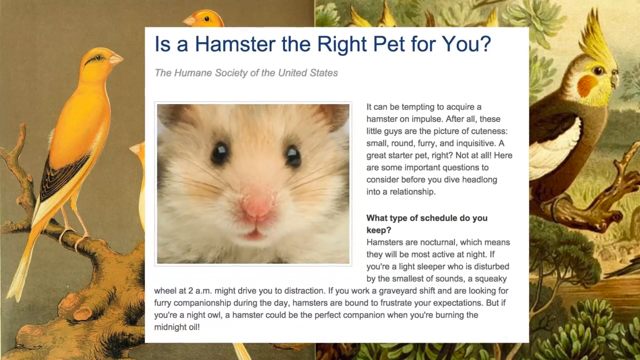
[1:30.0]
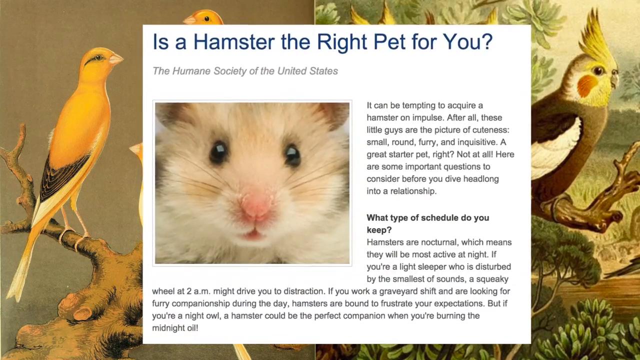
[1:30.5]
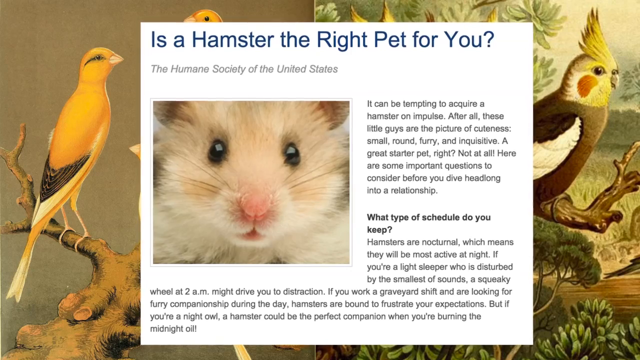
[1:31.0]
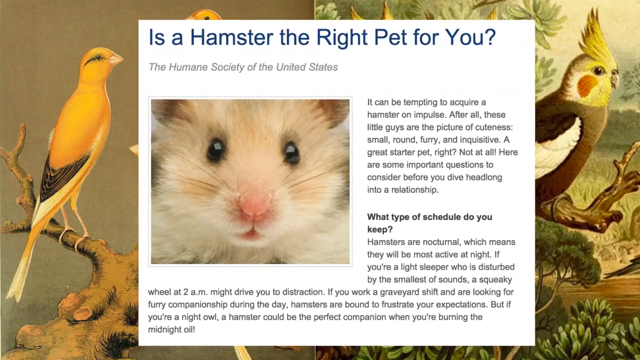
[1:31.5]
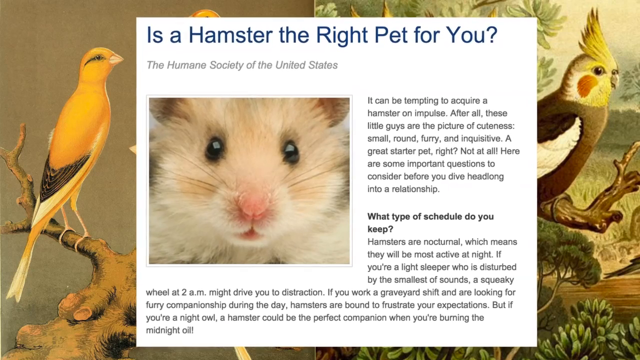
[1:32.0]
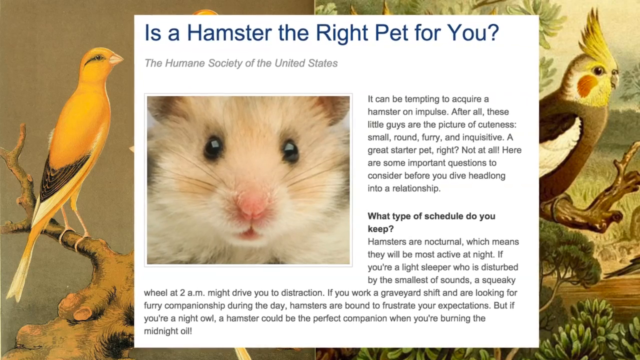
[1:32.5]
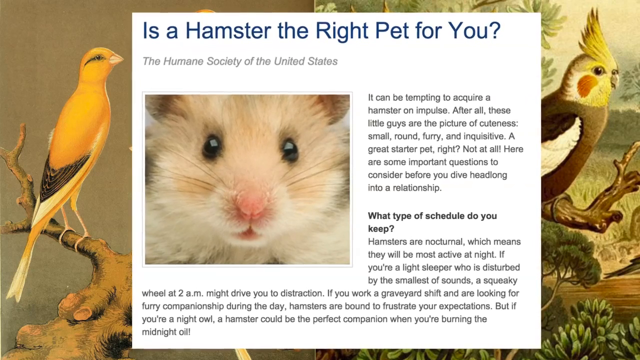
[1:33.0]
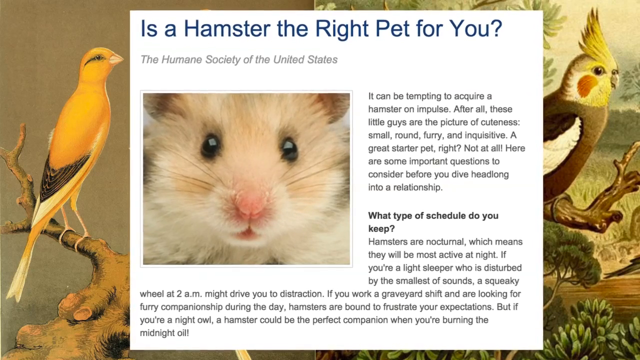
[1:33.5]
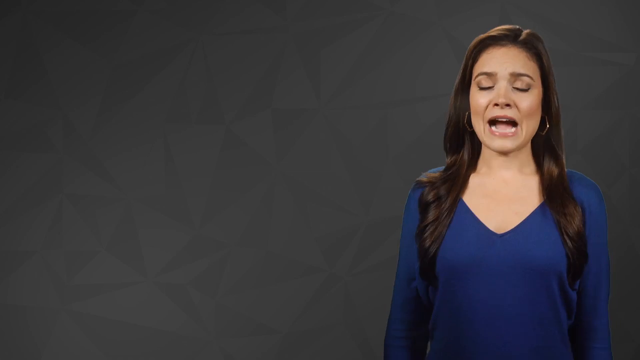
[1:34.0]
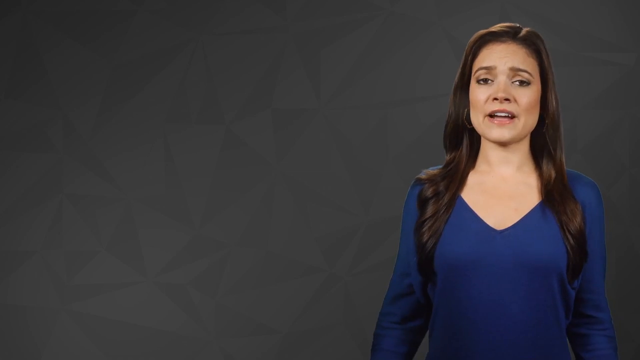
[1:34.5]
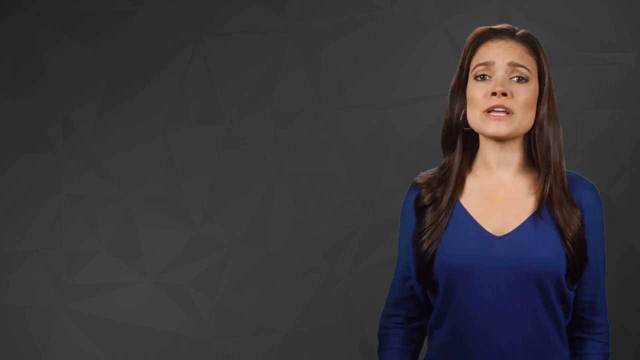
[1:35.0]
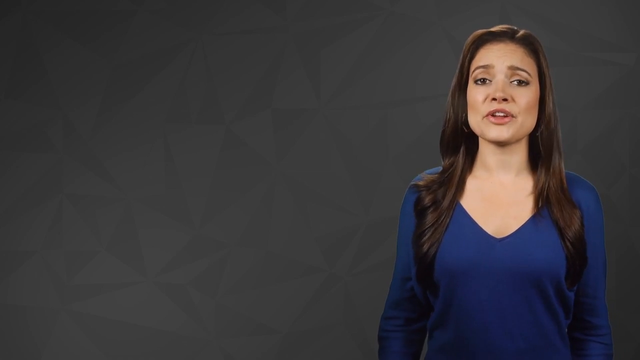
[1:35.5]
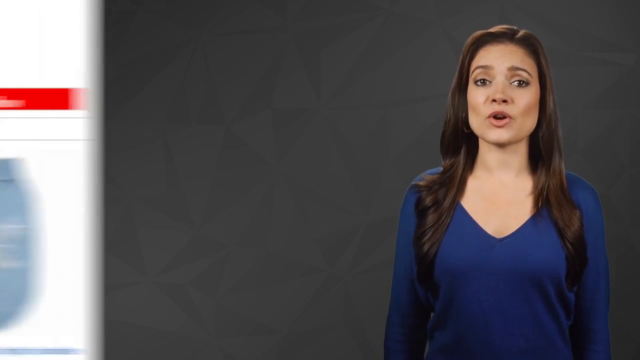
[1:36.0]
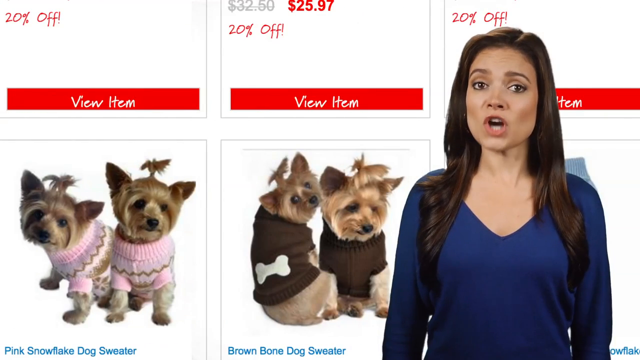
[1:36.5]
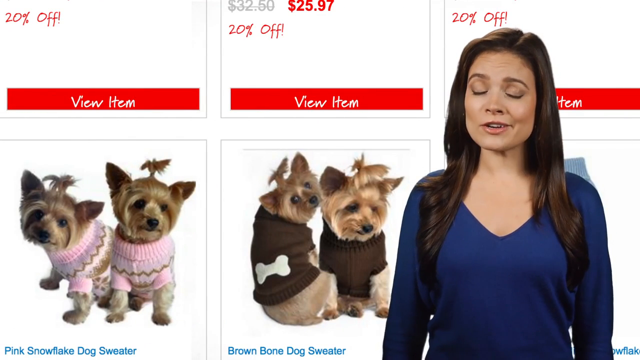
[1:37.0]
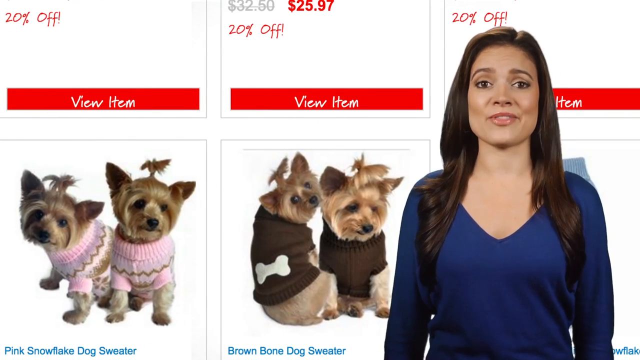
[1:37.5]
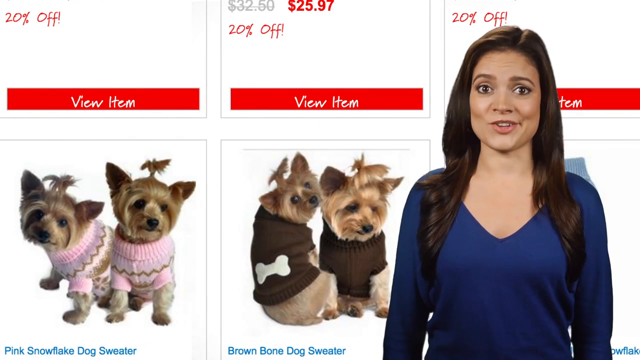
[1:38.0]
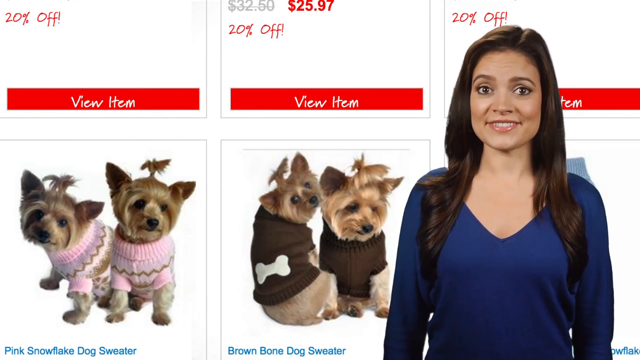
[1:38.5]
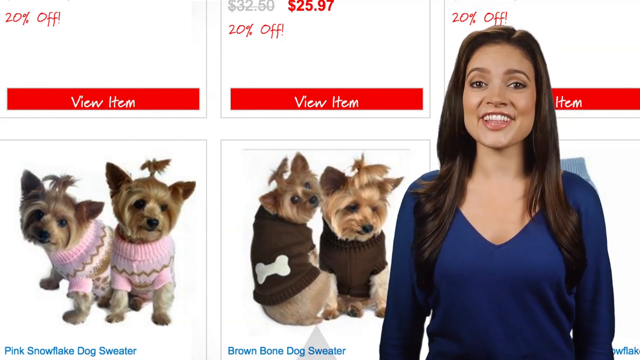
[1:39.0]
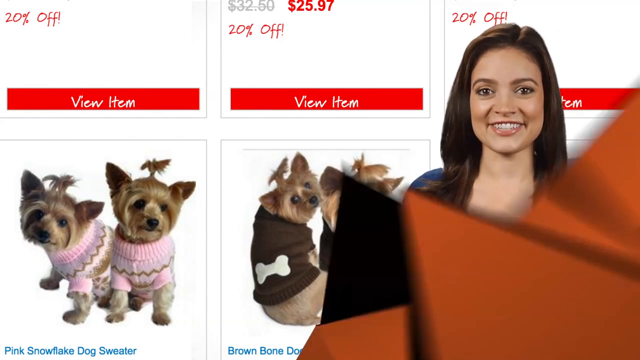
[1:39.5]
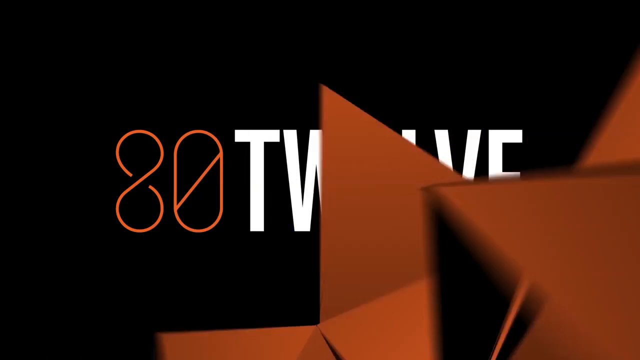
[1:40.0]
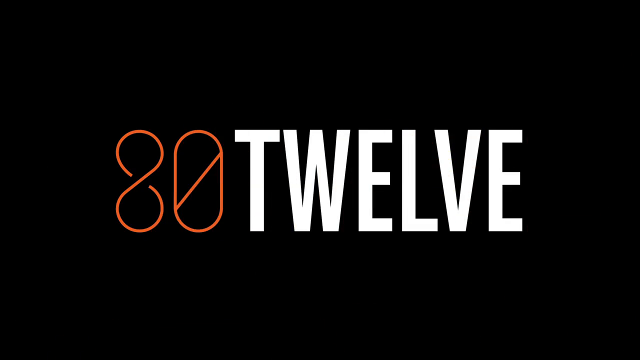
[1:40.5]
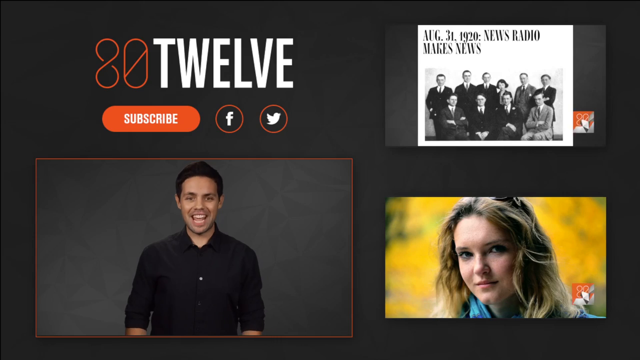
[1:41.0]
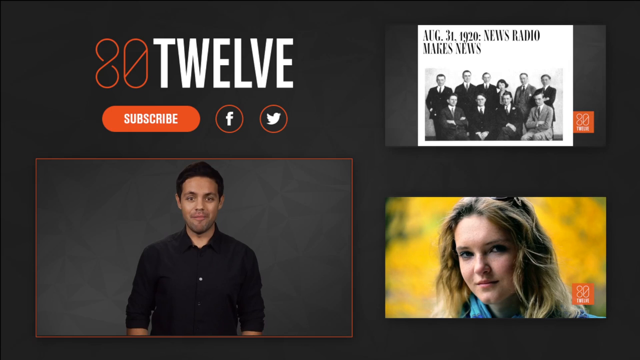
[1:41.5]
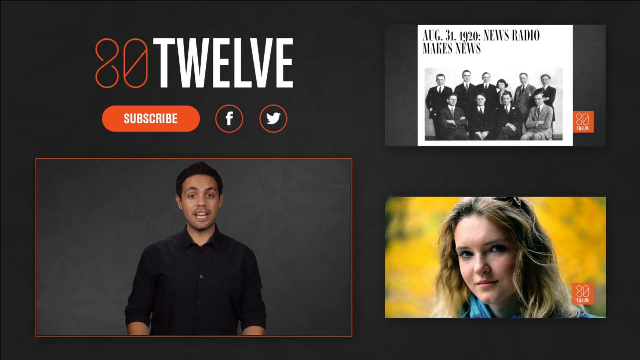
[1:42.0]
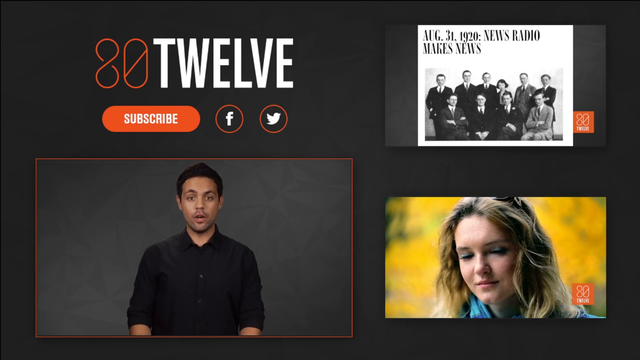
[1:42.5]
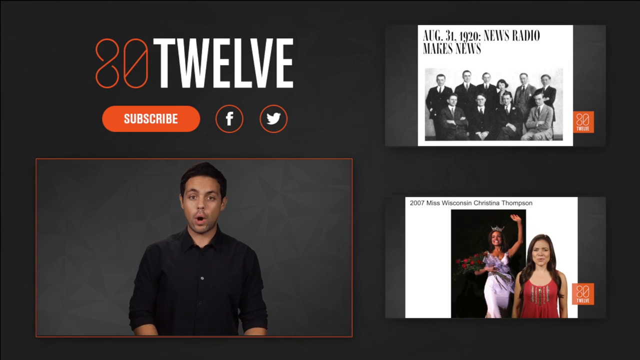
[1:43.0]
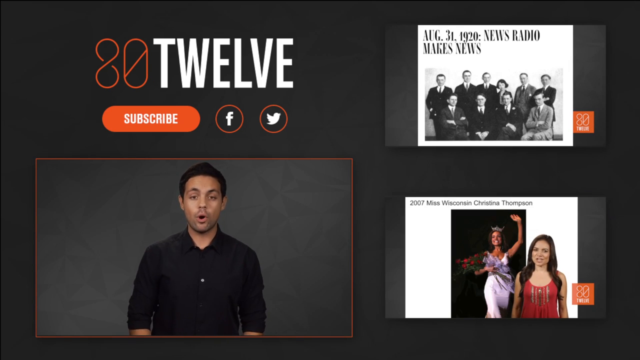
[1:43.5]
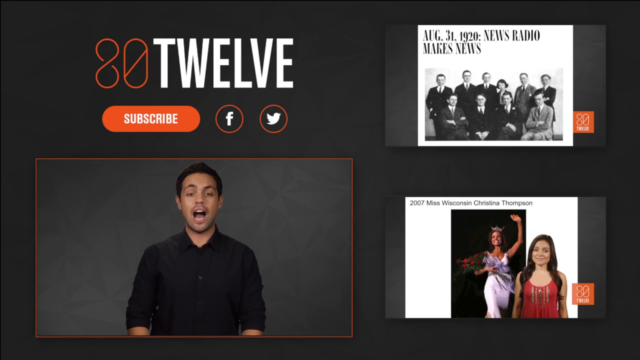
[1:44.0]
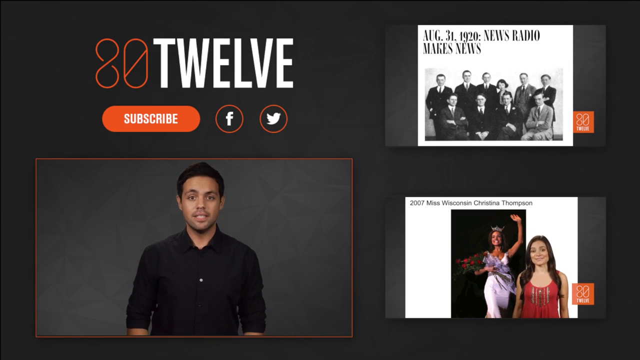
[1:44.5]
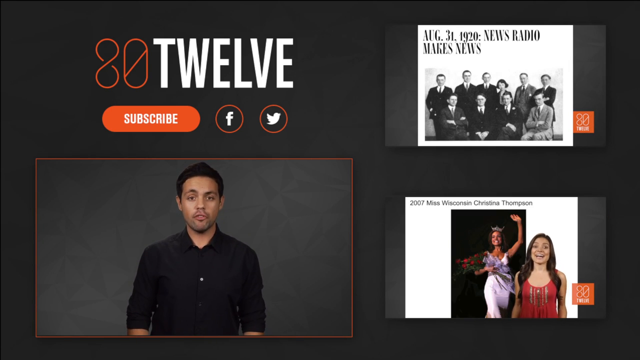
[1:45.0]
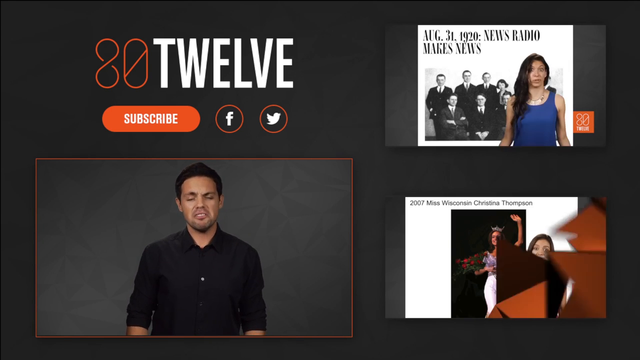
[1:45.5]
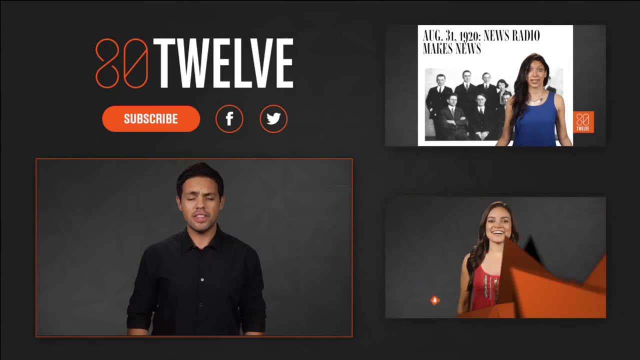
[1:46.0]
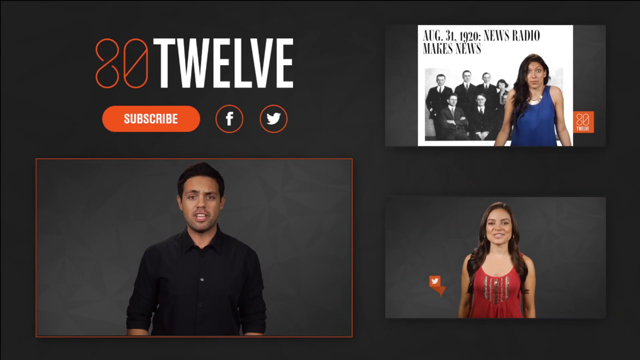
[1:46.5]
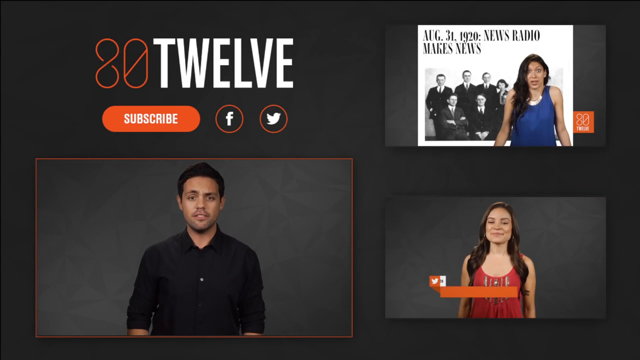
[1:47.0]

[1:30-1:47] The screenshot zooms in a little bit. The video then changes, and once again the black background appears with the lady talking to the camera, standing to the very right of the screen. Behind her, a screenshot of a website selling something appears, showing items and some prices; the items pictured are clothing for dogs. The lady keeps talking and smiling to the camera. Next, an animation shows the program's logo, "80Twelve", in the middle of the screen. Then comes the outro: at the very top left is the logo with the subscribe button underneath, followed by three more rectangles. The one underneath shows a man on a black background talking to the camera, and on the left are previews of two other videos from the same channel.